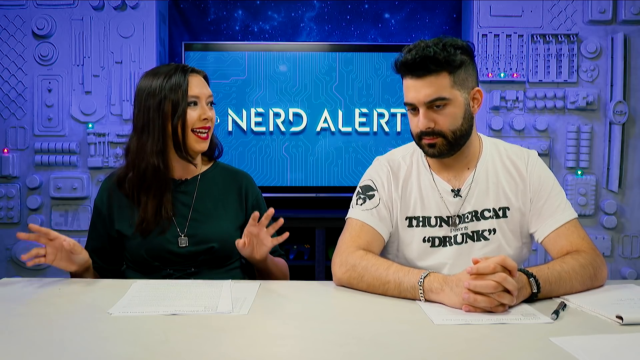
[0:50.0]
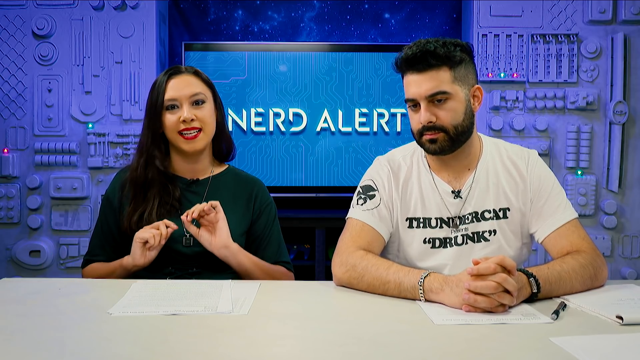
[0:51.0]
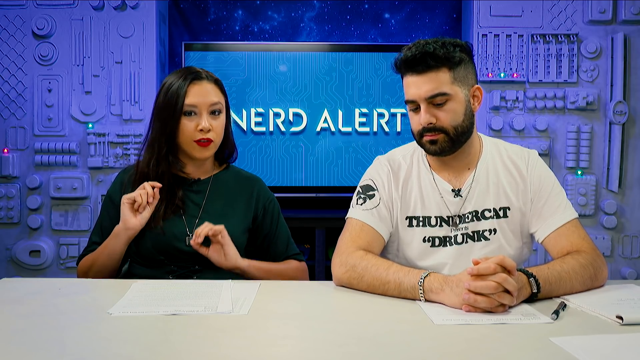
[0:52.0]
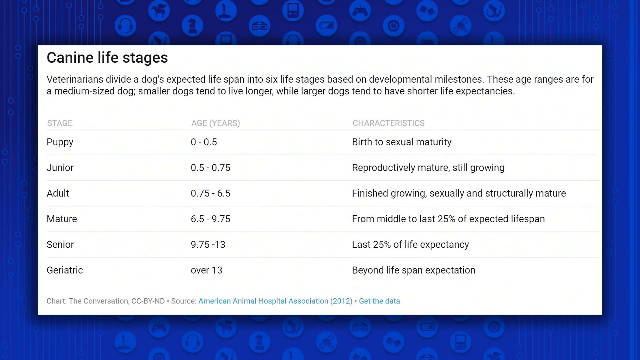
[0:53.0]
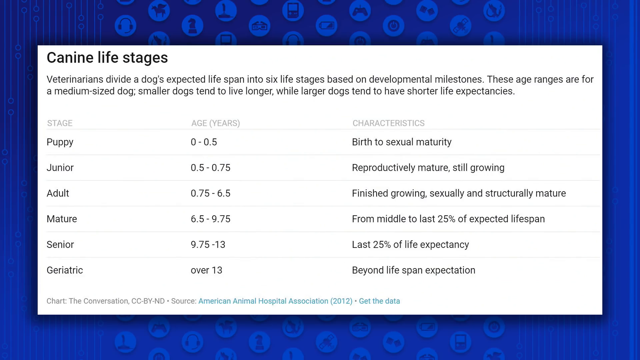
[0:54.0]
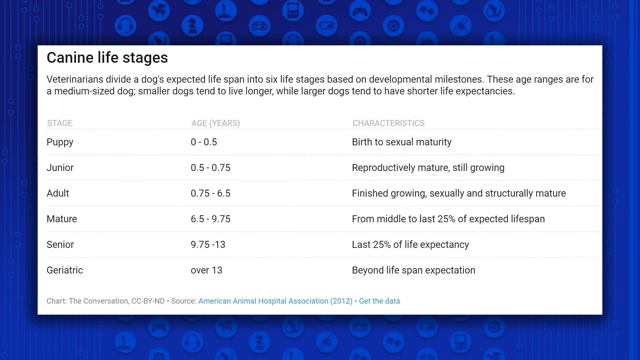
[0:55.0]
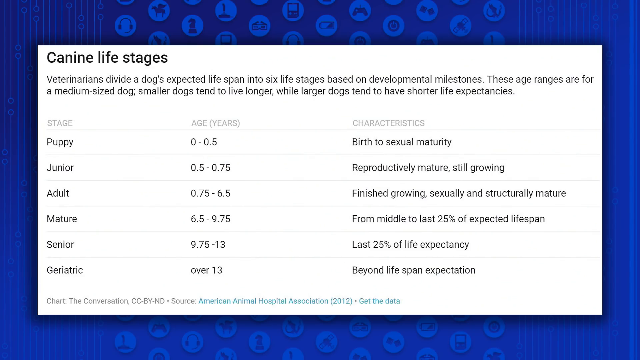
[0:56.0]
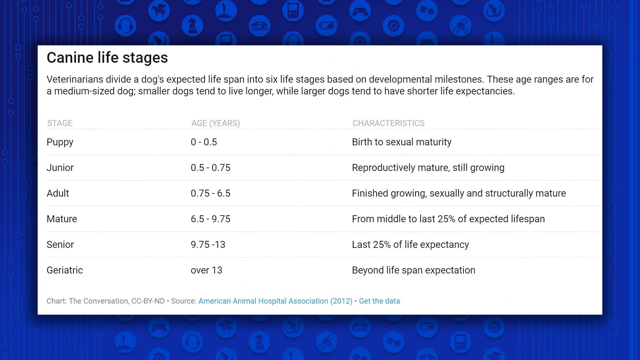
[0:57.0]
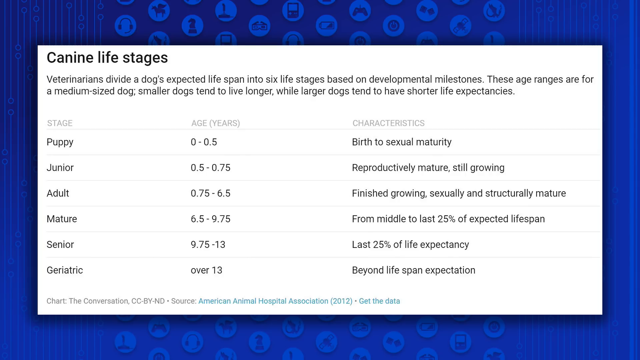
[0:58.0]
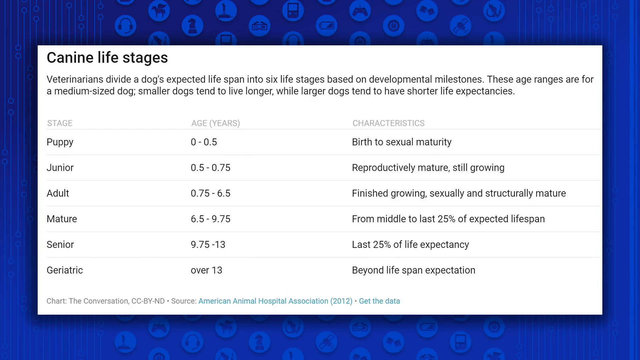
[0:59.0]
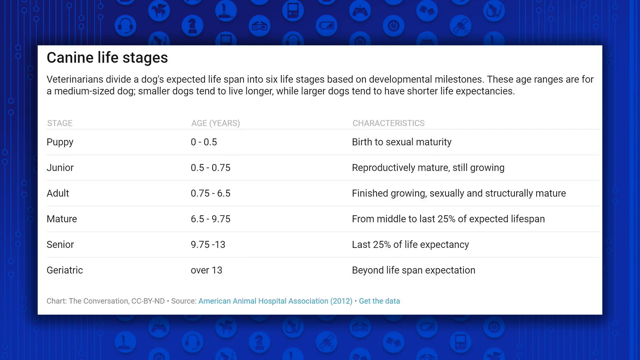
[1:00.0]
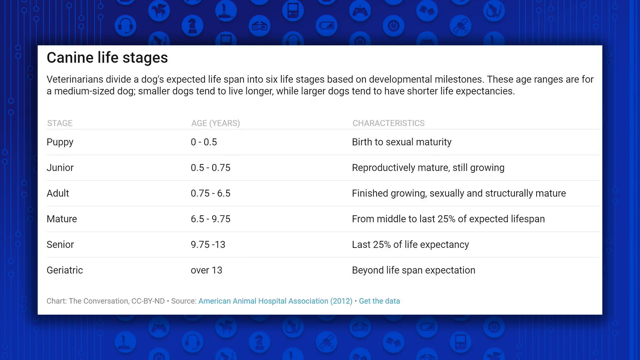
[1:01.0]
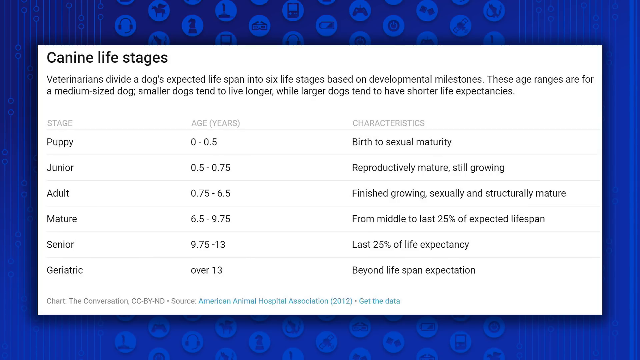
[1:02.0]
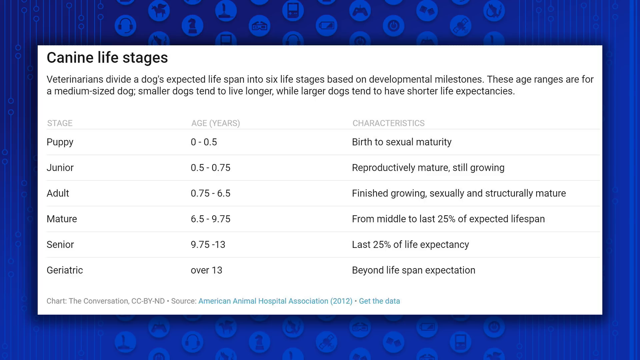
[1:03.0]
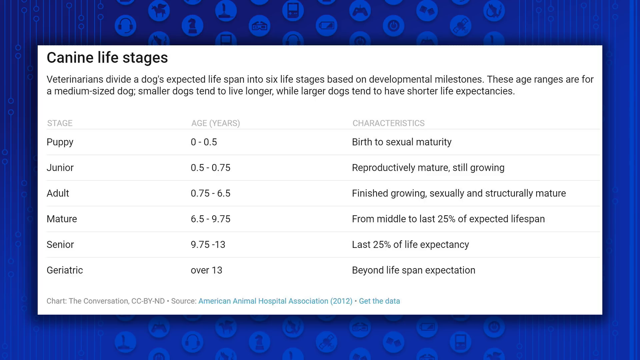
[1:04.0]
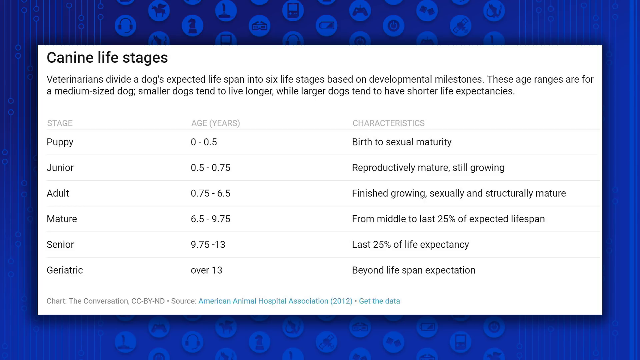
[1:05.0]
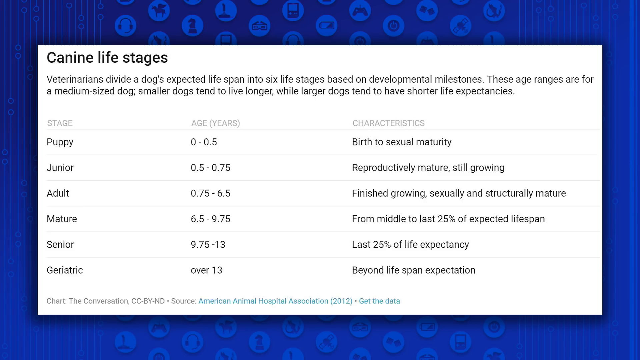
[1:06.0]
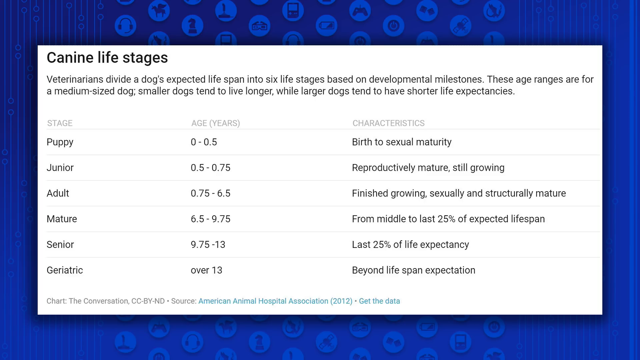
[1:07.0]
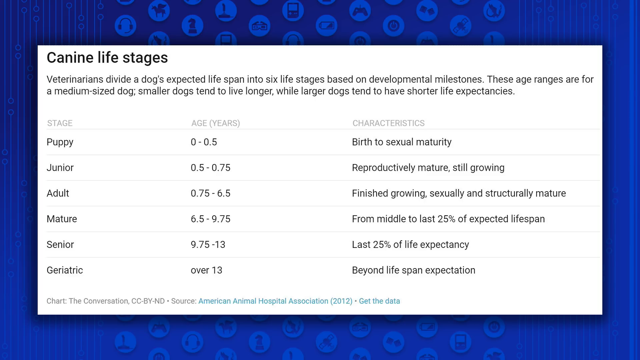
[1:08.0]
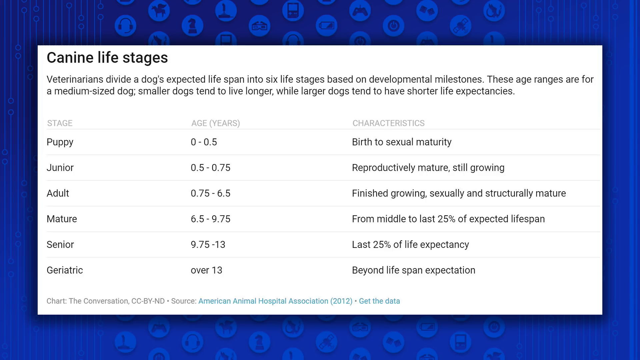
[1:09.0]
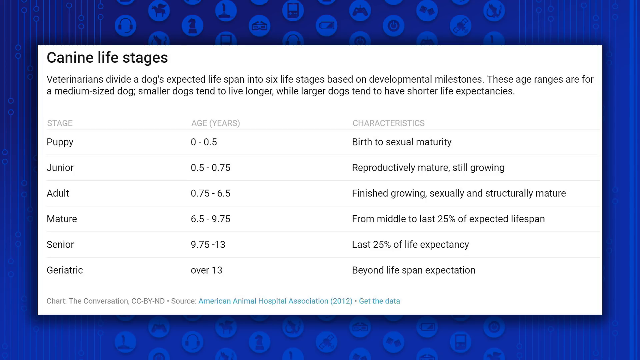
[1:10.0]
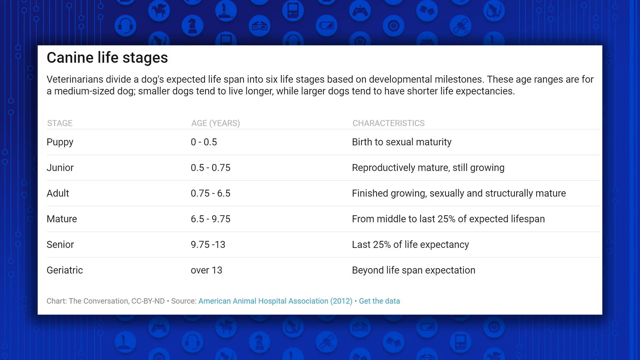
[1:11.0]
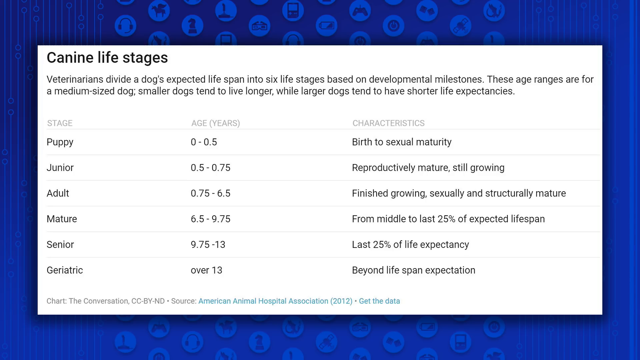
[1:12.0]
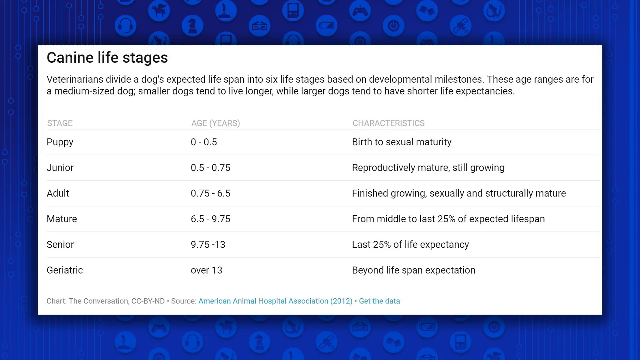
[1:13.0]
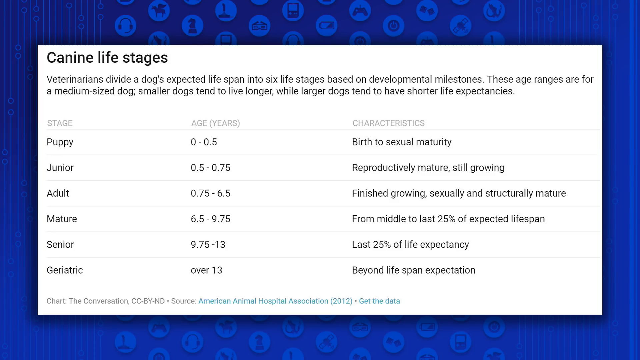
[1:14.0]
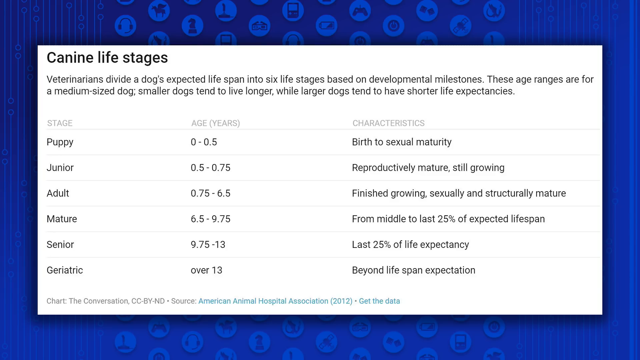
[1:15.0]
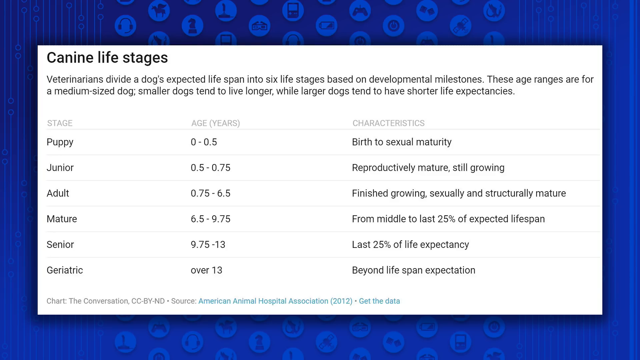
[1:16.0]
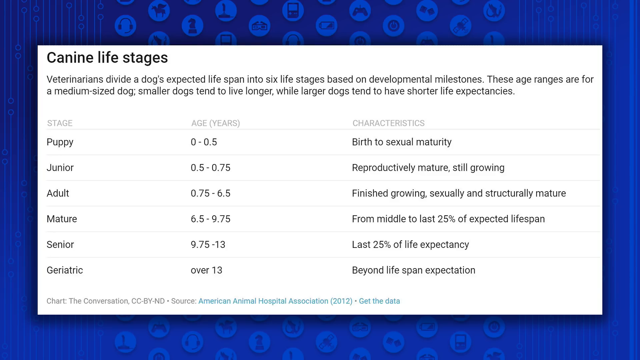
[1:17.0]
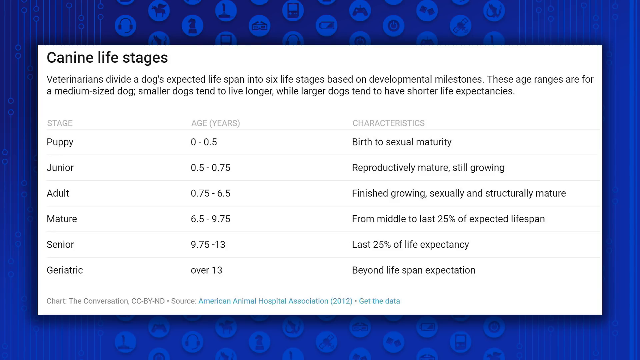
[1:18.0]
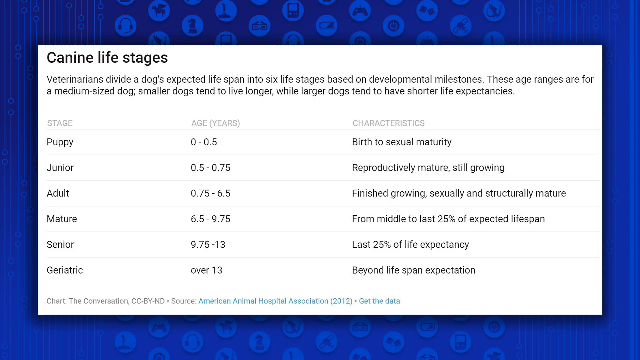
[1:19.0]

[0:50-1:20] A woman who looks around 33 years old, wearing a green top, a necklace and red lipstick, with long black hair, explains while looking at the screen and moving her hands. Her male counterpart wears a white T-shirt with black writing, and he has a mohawk hairstyle and a black beard. He leans both hands on the white desk in front of them, where there are white papers. A close-up then shows a page with the subtopic "canine life stages" and a sentence reading "veterinarians divide a dog's expected lifespan into six life stages based on developmental milestones. These age ranges are for a medium sized dog. Smaller dogs tend to live longer". Below are the headings "stage", "age" and "characteristics". The rows list puppy, 0 to 0.5, birth to sexual maturity; junior, 0.5 to 0.75, reproductively mature and still growing; adult, 0.7 to 6.5 years, finished growing, sexually and structurally mature; mature, 6.5 to 9.75 years, mid to last 25% of expected lifespan; senior, 9.75 to 13 years, last 25% of life expectancy; and geriatric, over 13, beyond lifespan expectations. Underneath is a chart credit reading "CC-BY-ND Source American Animal Hospital Association 2012", written in blue, while everything else on the page is in black and white.